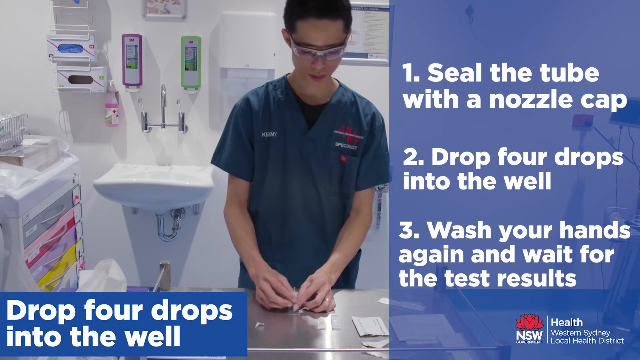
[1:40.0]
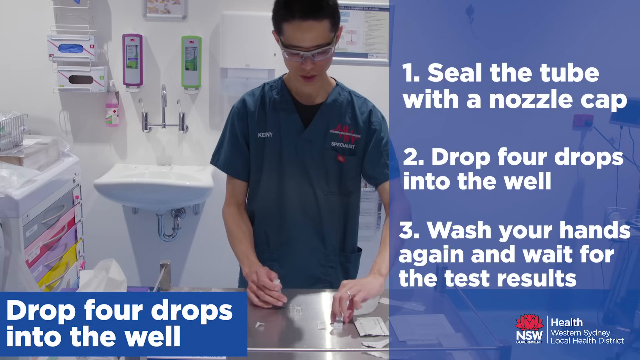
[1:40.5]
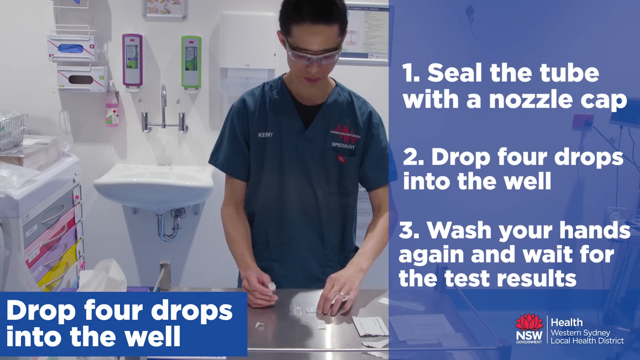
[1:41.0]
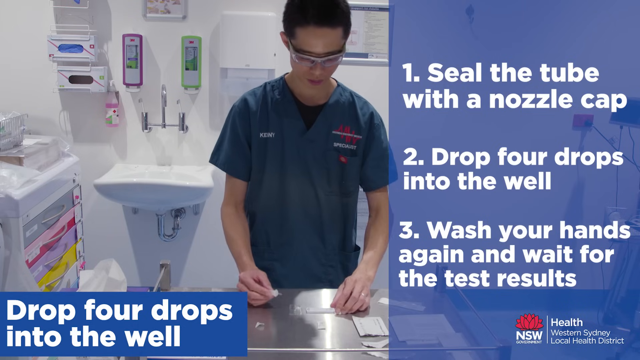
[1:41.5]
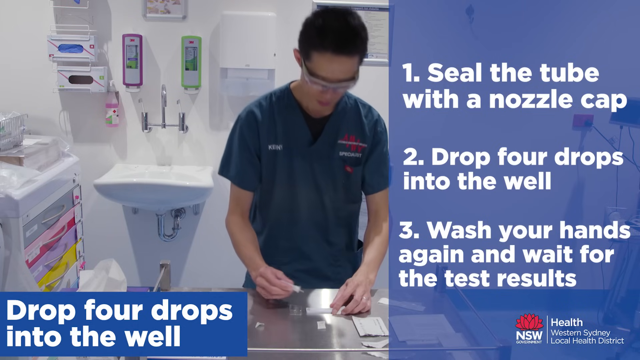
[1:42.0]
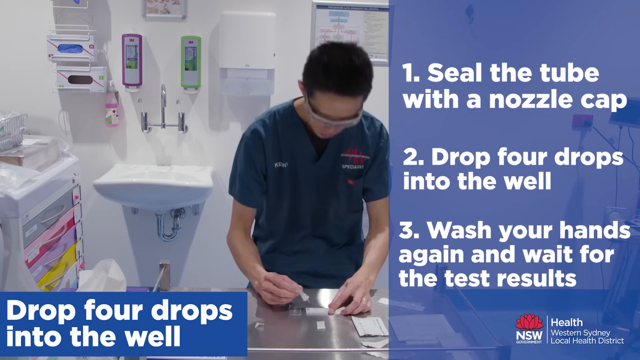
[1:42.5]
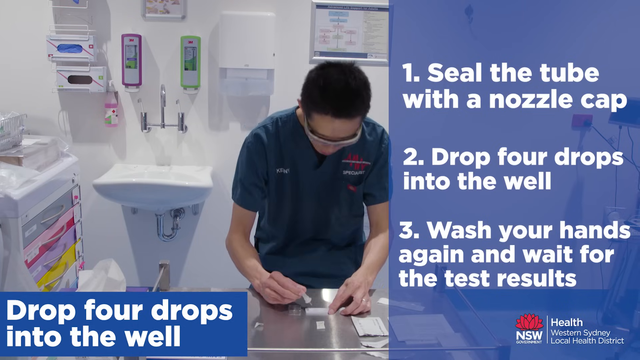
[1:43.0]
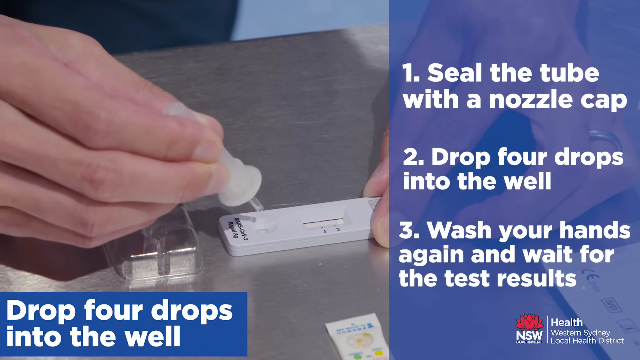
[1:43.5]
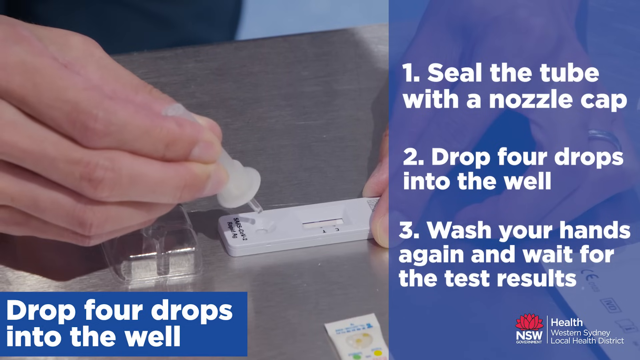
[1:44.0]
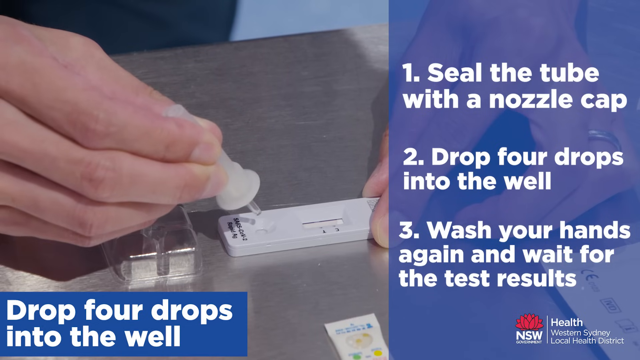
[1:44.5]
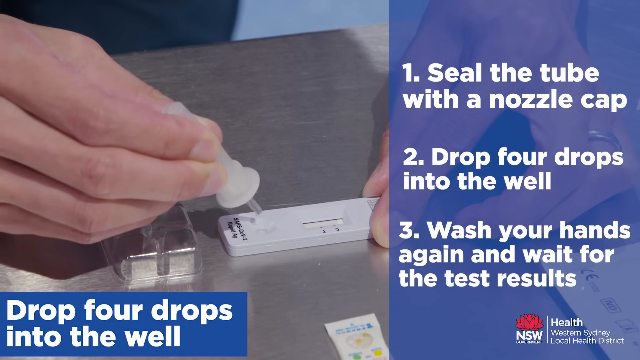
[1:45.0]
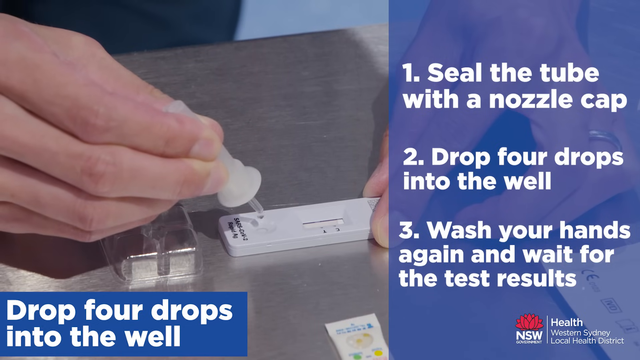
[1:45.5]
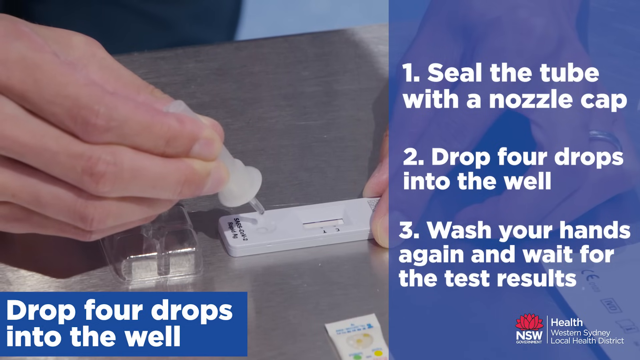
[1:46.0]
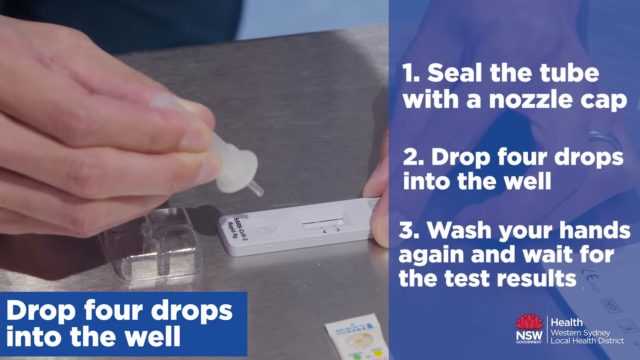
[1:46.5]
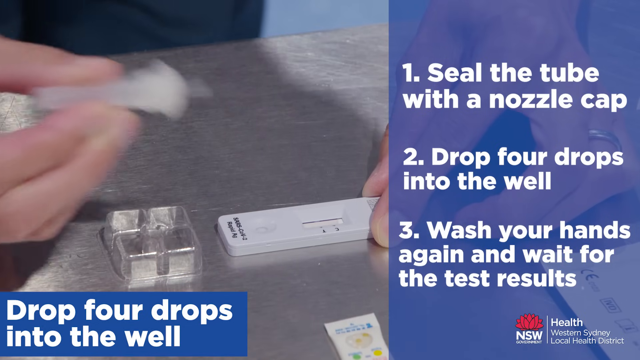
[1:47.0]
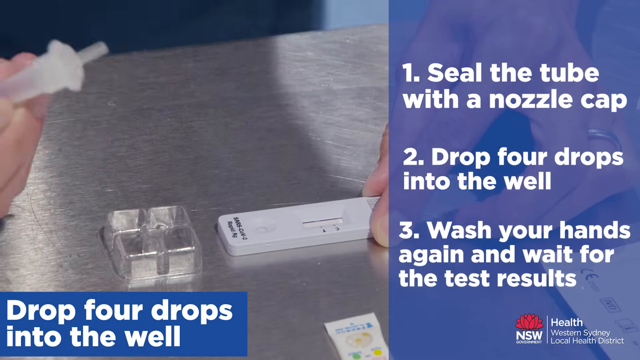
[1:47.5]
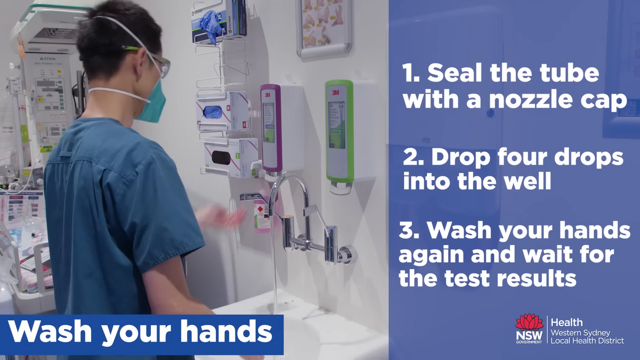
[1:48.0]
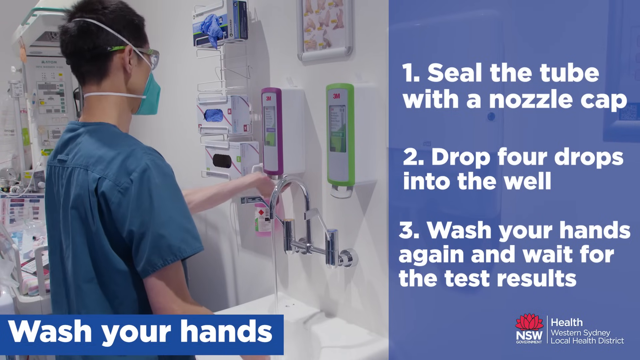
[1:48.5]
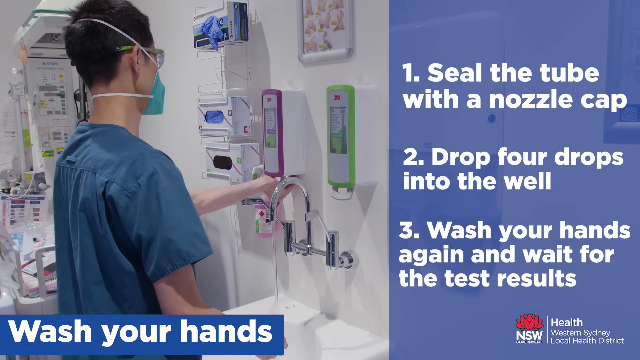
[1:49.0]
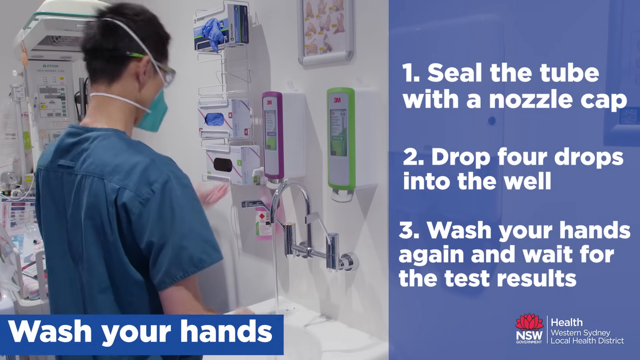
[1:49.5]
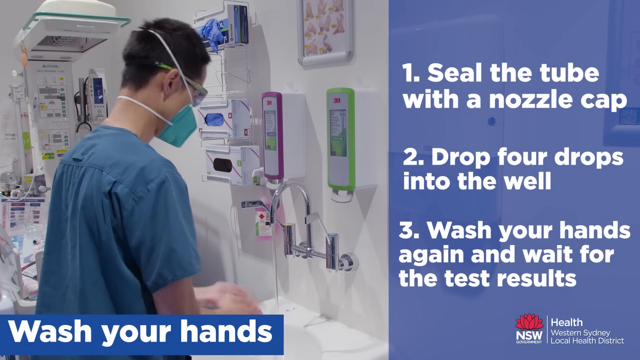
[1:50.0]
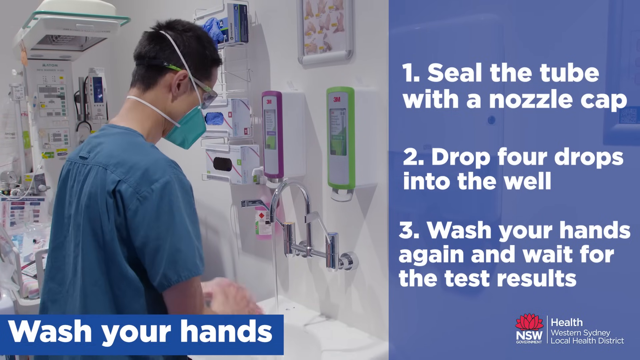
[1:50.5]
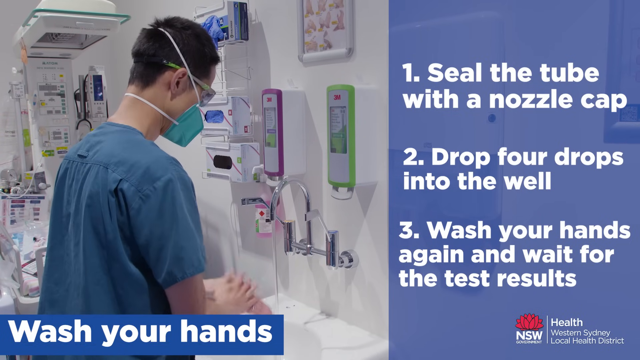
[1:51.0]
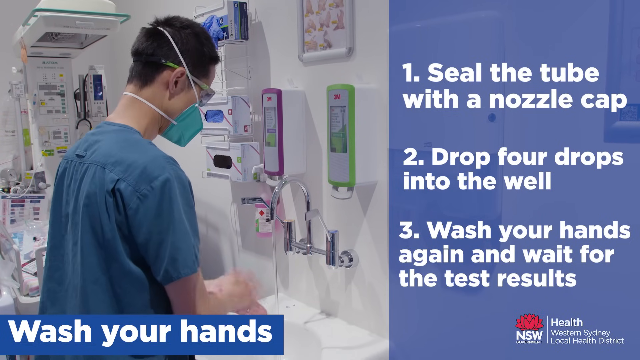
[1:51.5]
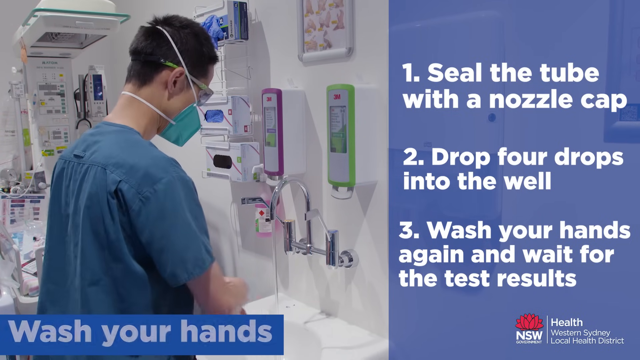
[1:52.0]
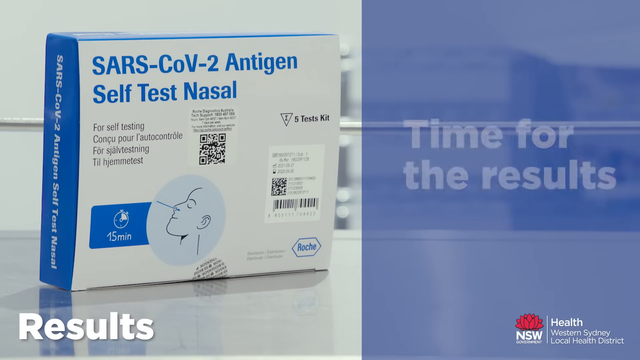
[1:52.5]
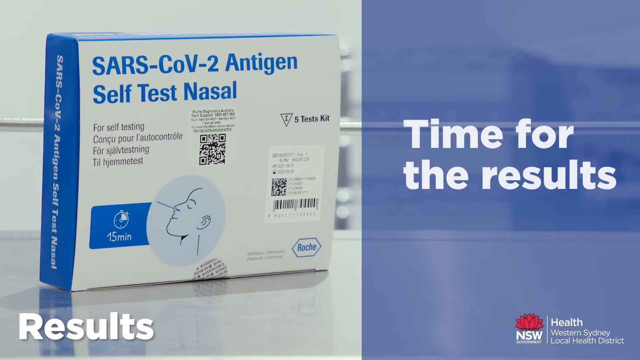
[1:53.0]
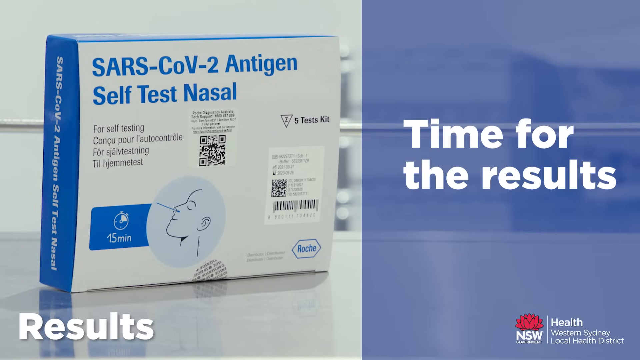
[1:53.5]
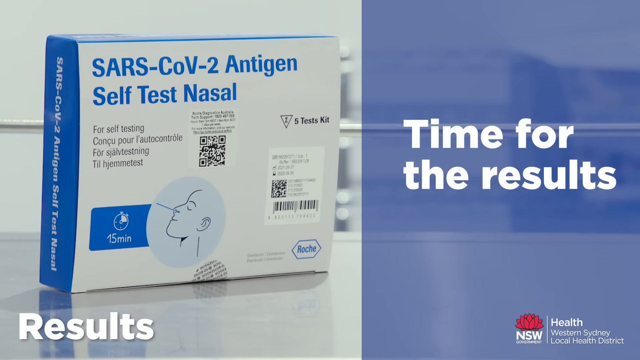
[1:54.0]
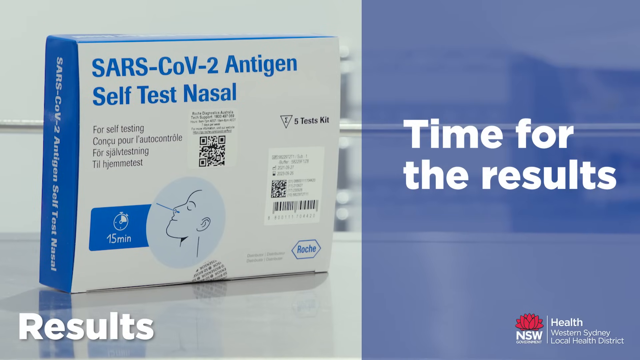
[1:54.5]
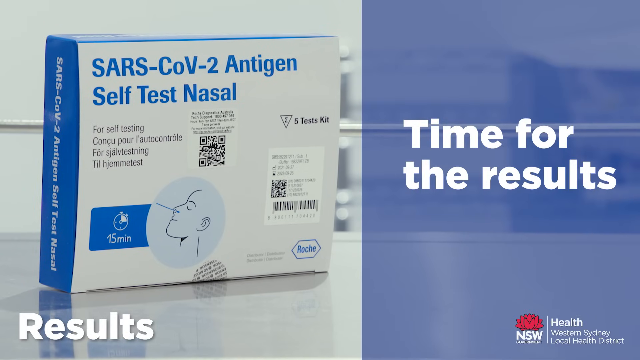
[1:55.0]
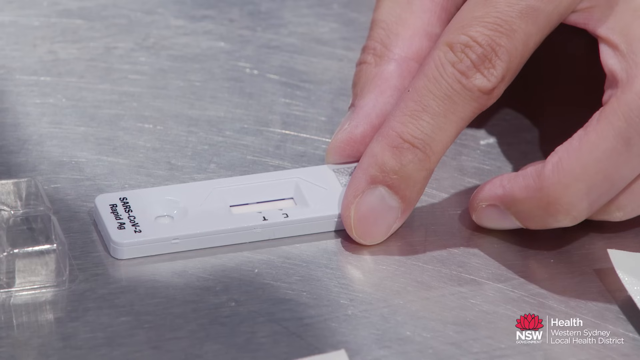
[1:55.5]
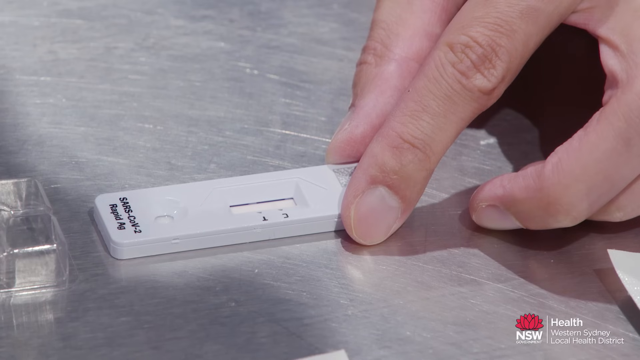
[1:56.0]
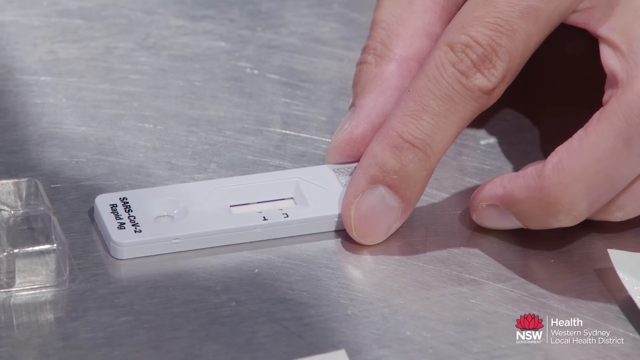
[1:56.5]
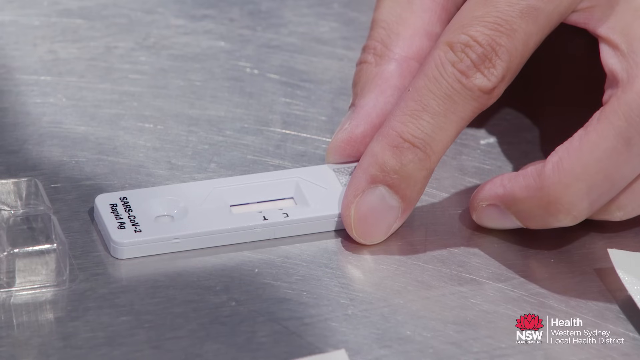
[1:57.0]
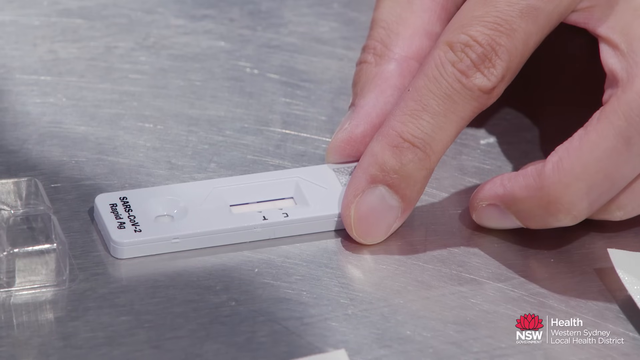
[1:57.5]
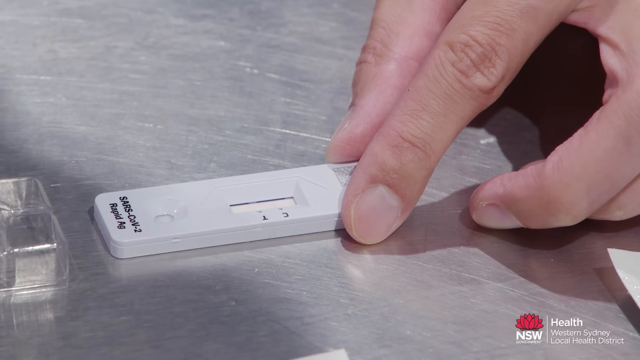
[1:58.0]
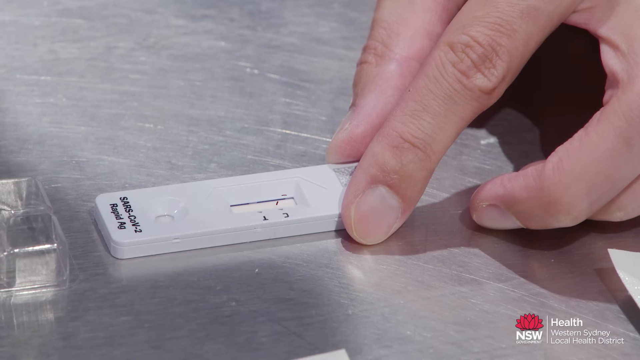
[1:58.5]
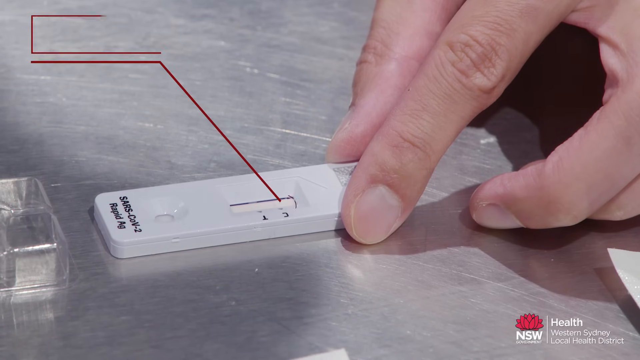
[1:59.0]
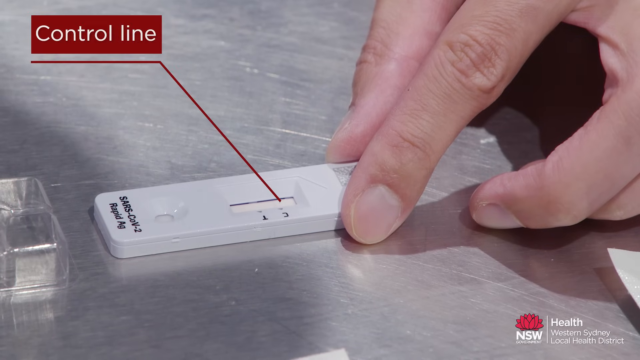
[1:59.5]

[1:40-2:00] An Asian man in a clinical setting is at a metal table handling what looks like a test. With a dropper he puts what appear to be multiple drops into a white stand that has a little indented area. He goes over to the sink, takes two pumps of some liquid hanging on the wall, and washes his hands thoroughly with soap. He is wearing a mask and goggles again. Text reads "time for results," then "control" pops up on the screen with a red line pointing to the control, and there is another spot underneath it. His hands are clean and his nails are short. He is white.